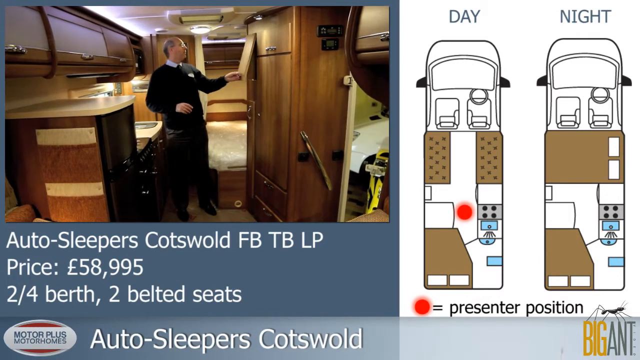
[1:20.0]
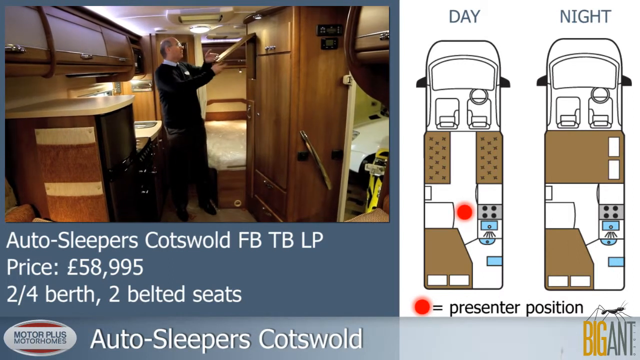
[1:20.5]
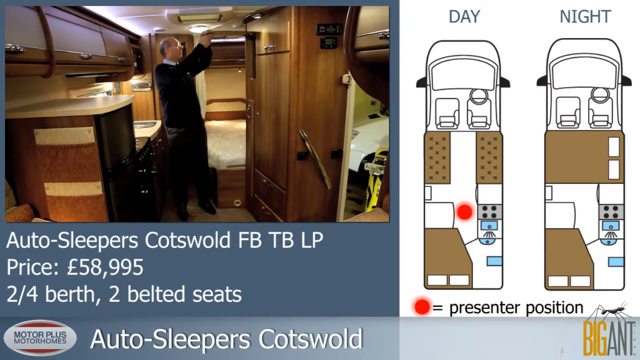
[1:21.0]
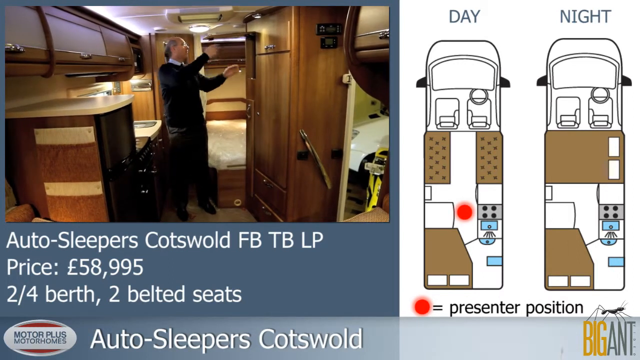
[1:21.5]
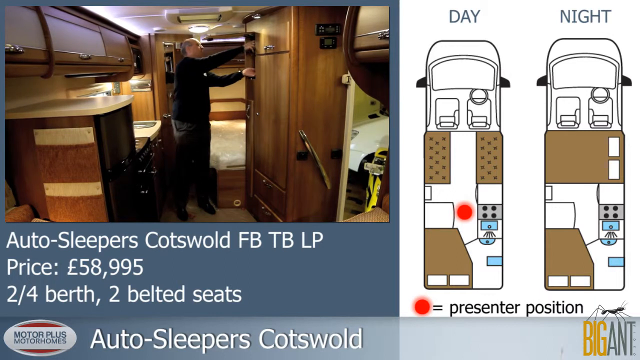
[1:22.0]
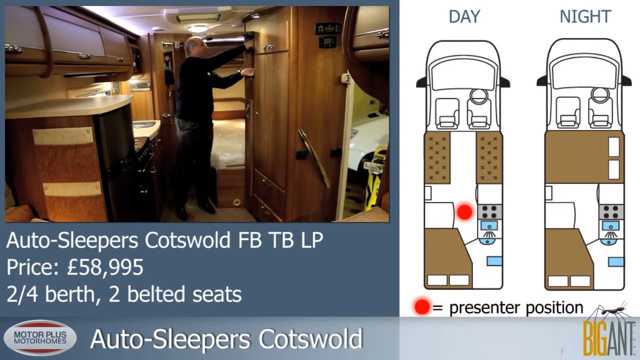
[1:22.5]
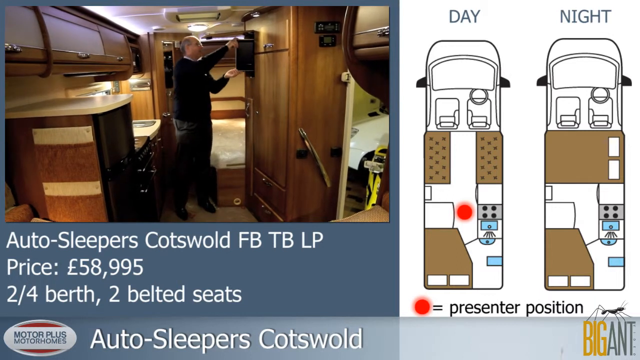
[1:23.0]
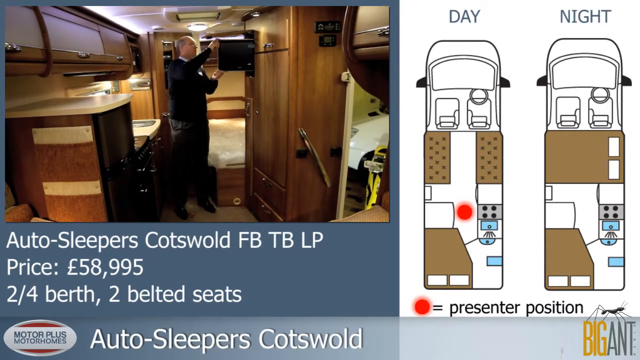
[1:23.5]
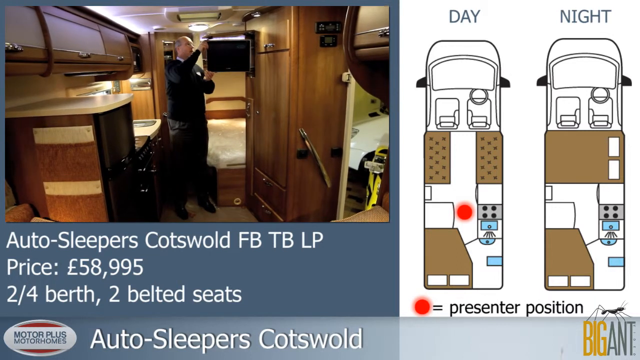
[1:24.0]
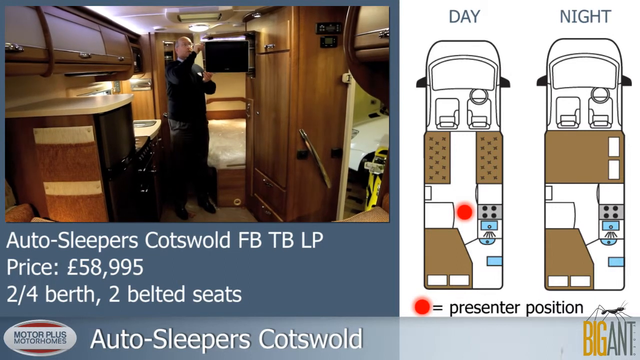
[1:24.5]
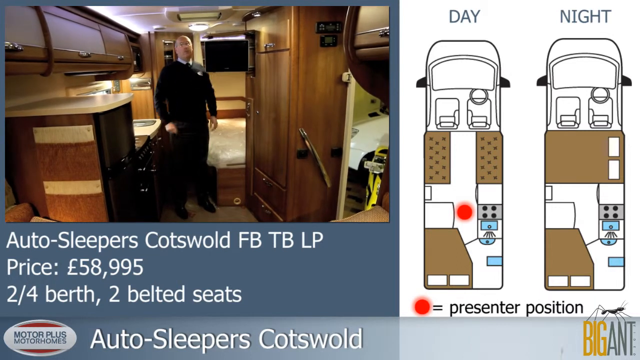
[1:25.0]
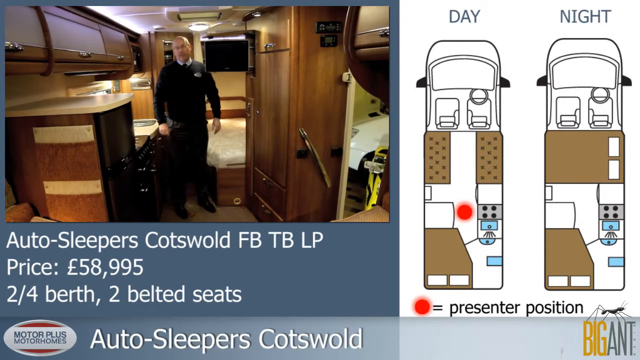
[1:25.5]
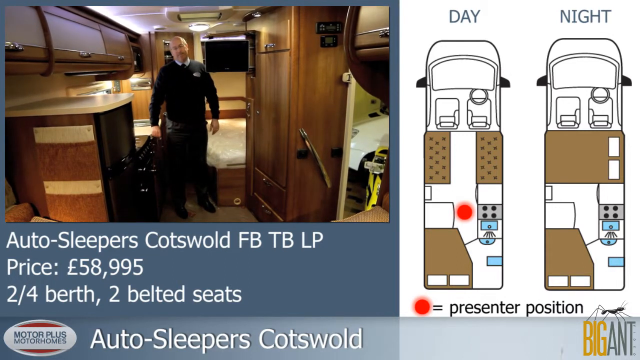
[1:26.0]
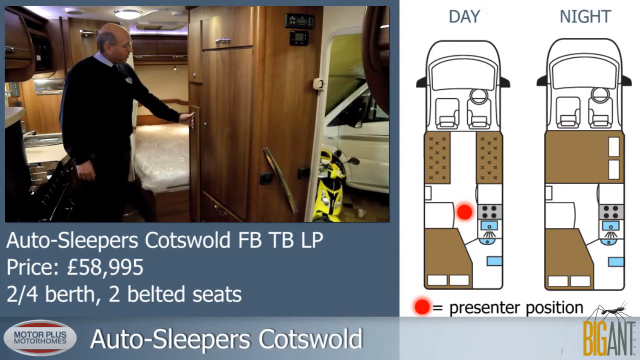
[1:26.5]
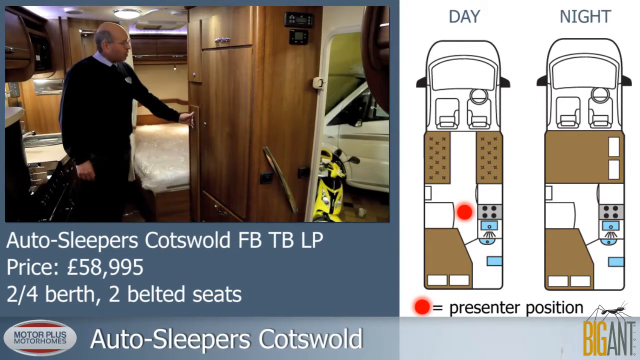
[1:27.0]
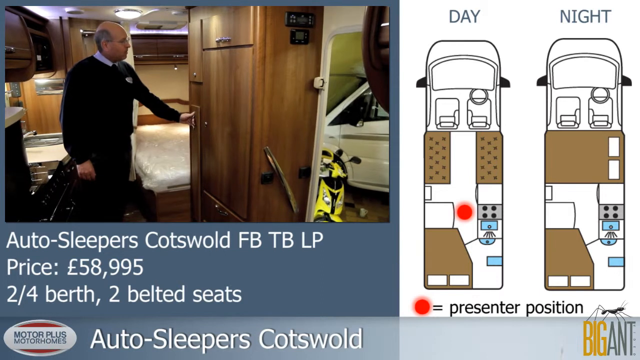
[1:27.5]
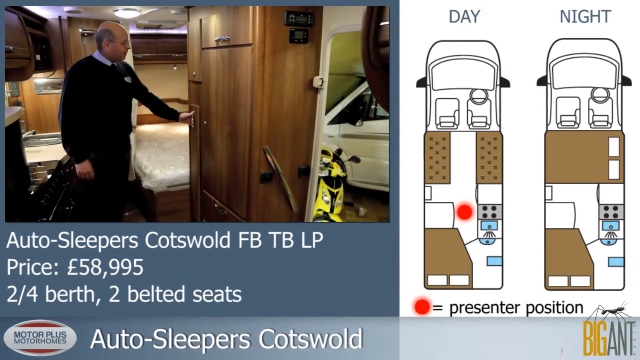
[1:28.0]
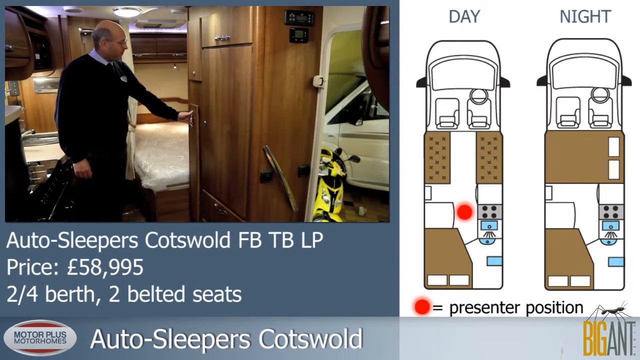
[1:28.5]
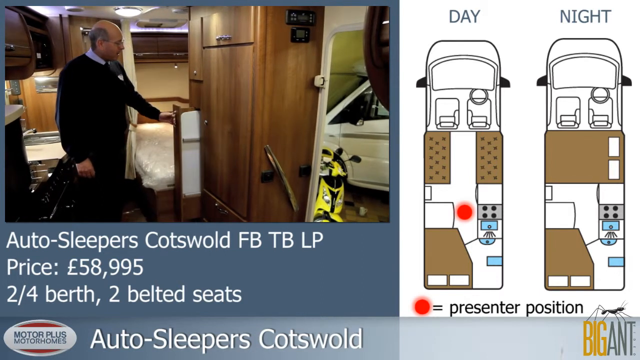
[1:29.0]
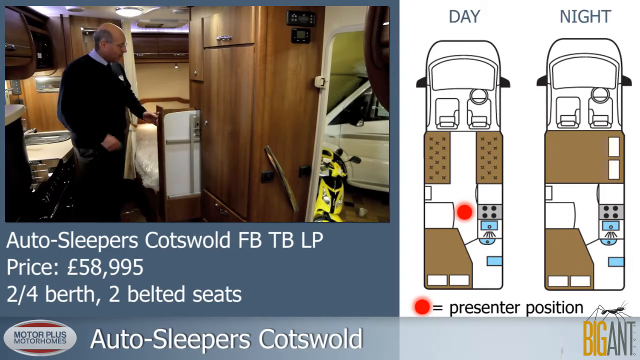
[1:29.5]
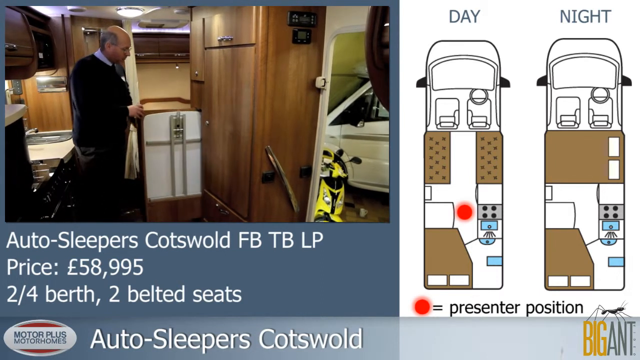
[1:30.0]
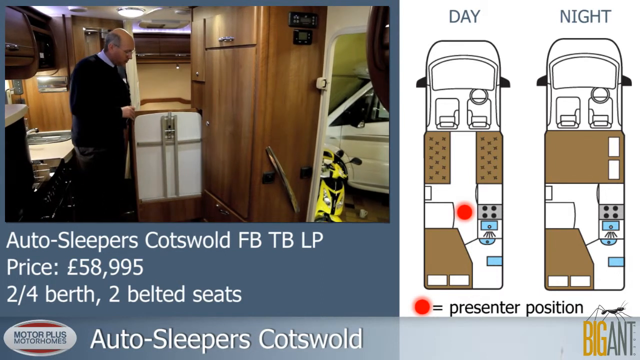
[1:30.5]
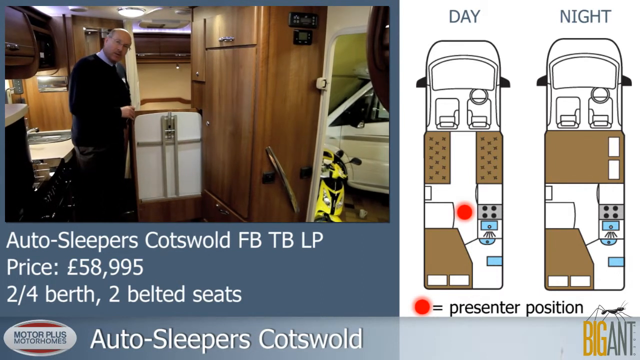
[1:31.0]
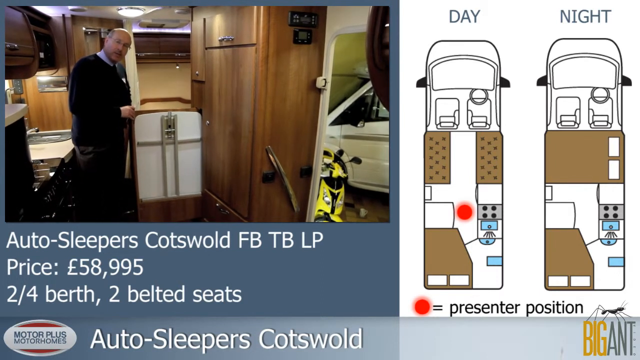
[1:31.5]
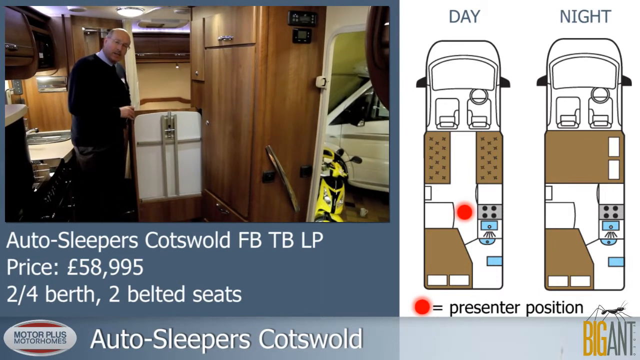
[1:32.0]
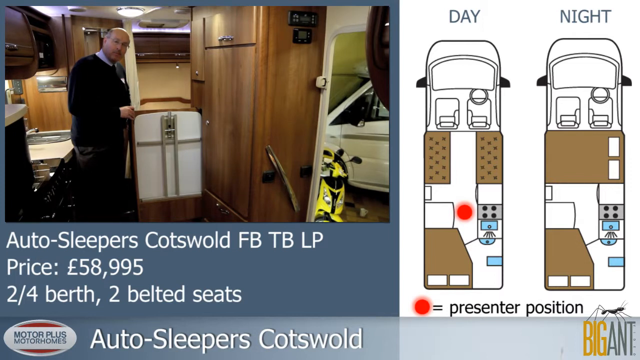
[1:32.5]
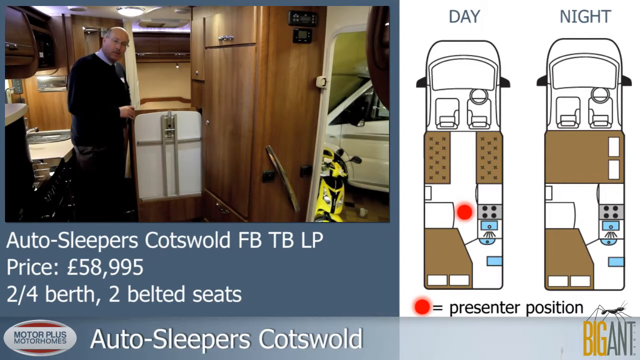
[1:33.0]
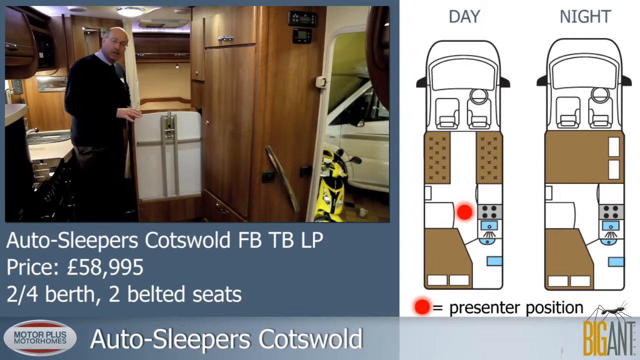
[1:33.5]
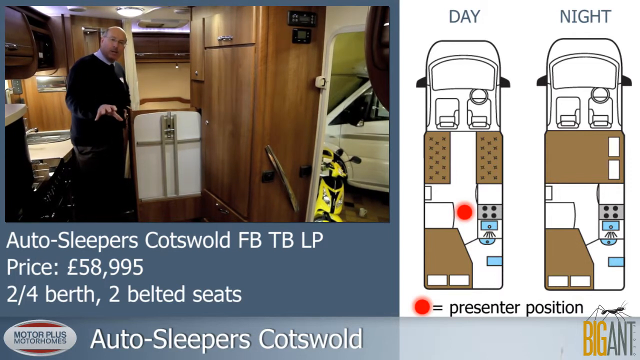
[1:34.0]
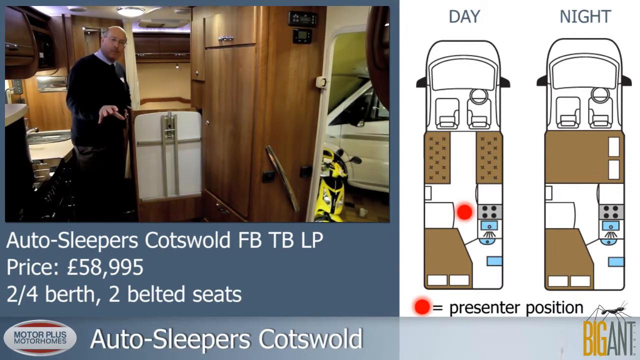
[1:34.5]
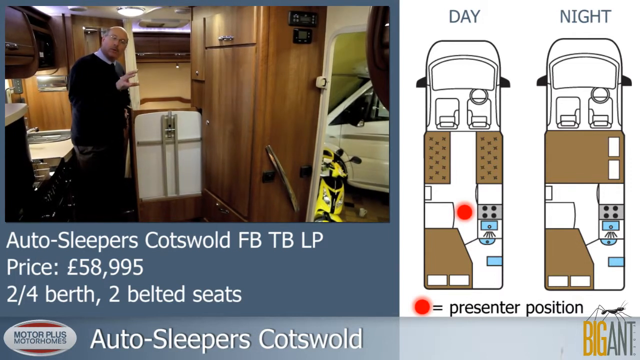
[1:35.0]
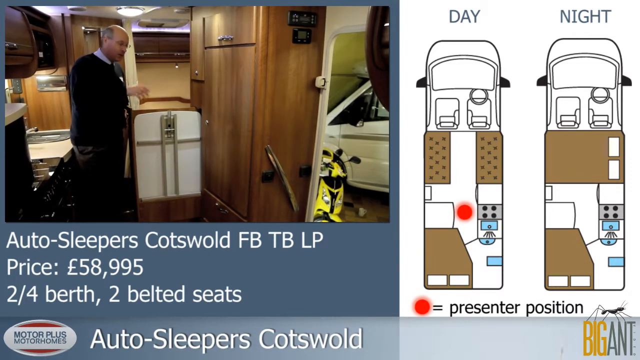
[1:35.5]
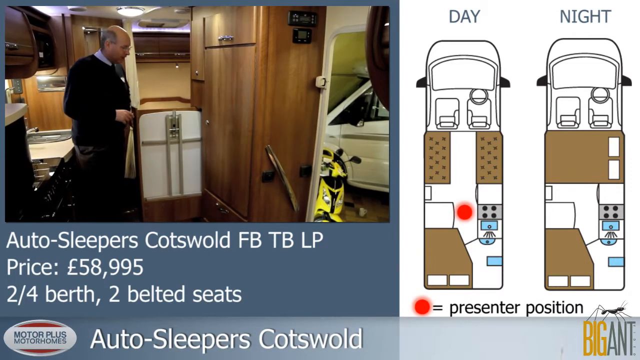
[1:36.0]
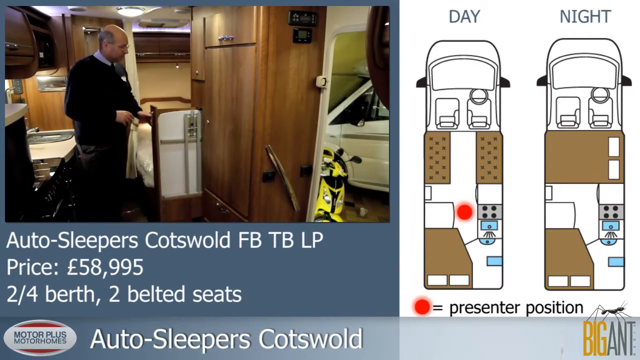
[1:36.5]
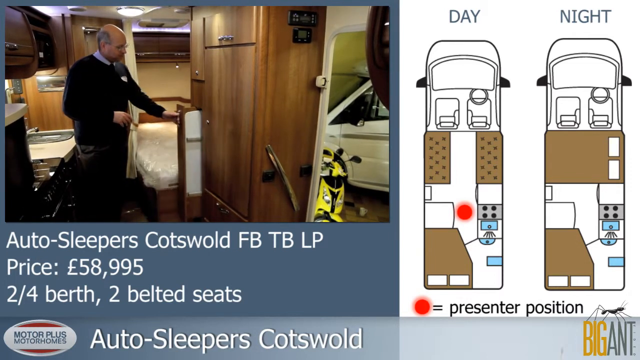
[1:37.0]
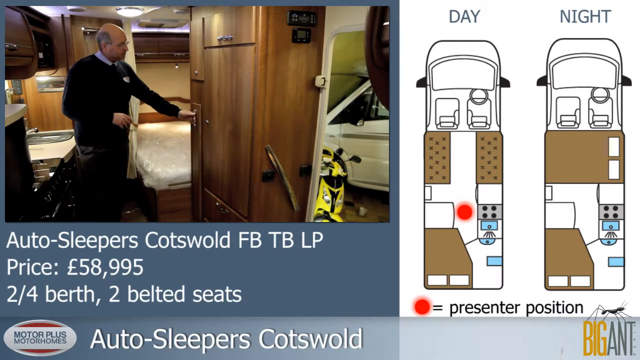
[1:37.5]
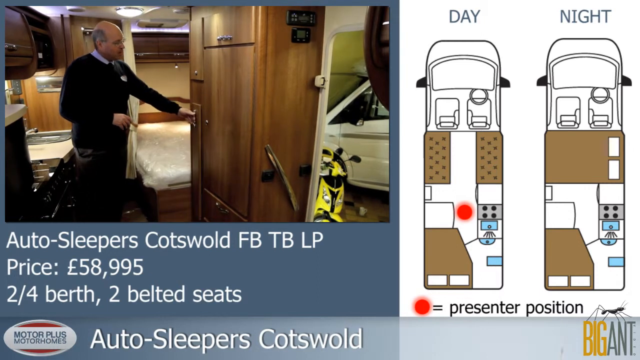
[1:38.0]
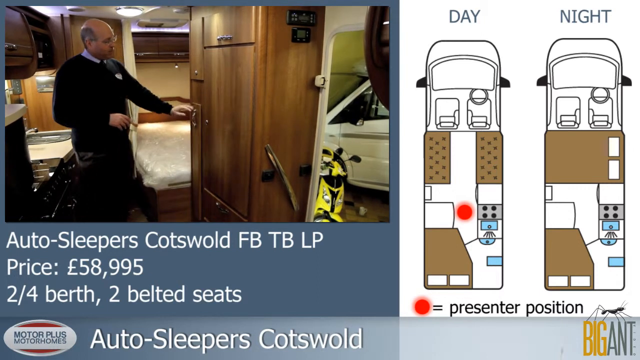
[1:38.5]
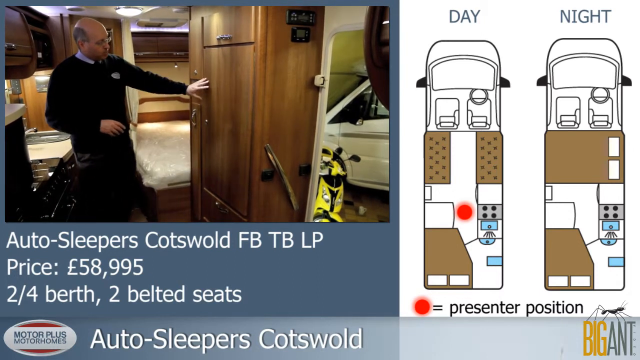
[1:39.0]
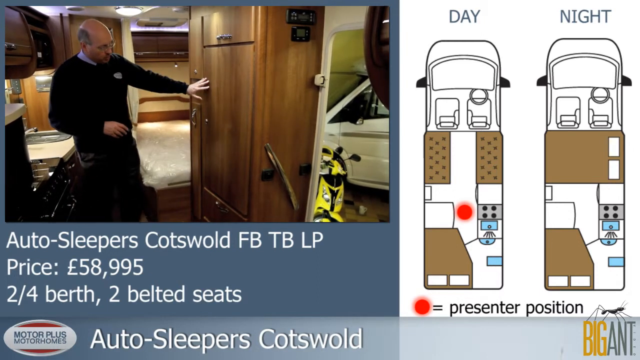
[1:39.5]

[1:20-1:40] The salesman slides something out of a side compartment to which it is attached; it is either a TV or a microwave, though it is unclear which. Next there is something like a pull-down table, apparently. All of the cabinets are finished in wood effect and appear to have metal handles, and the vehicle has plenty of lighting.